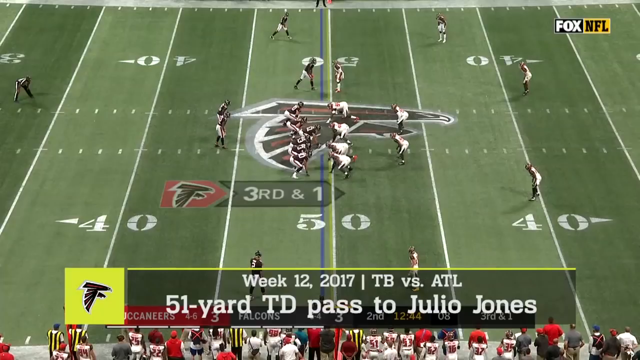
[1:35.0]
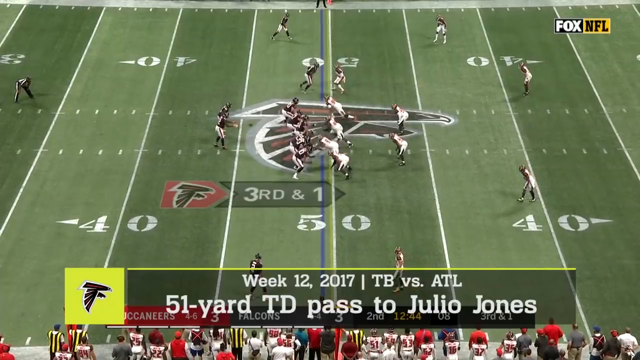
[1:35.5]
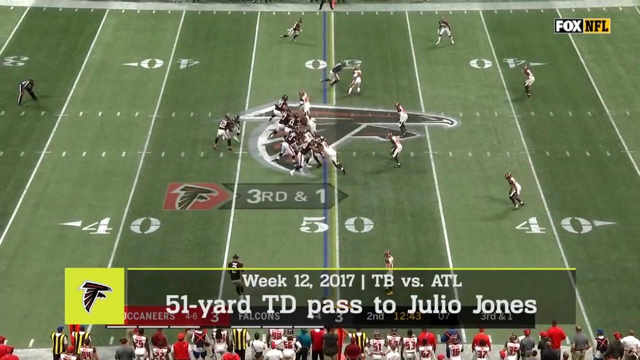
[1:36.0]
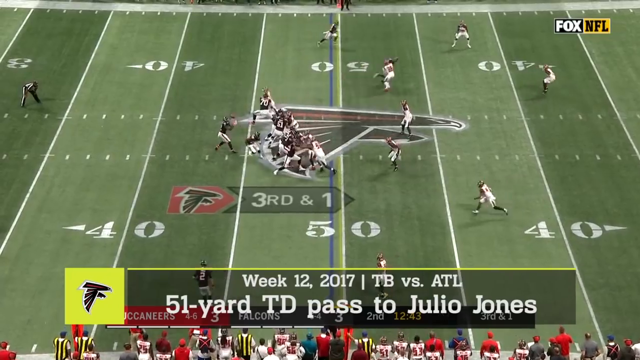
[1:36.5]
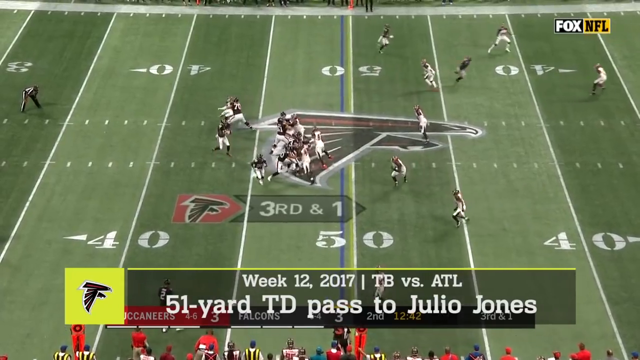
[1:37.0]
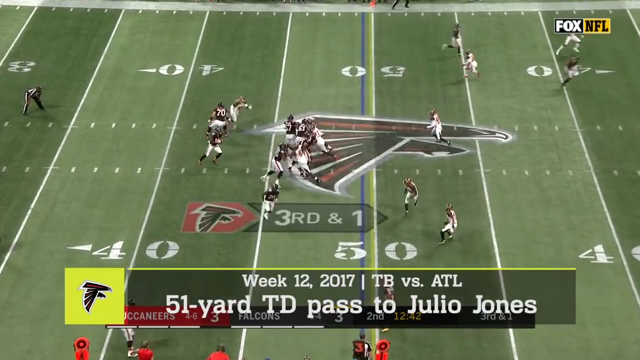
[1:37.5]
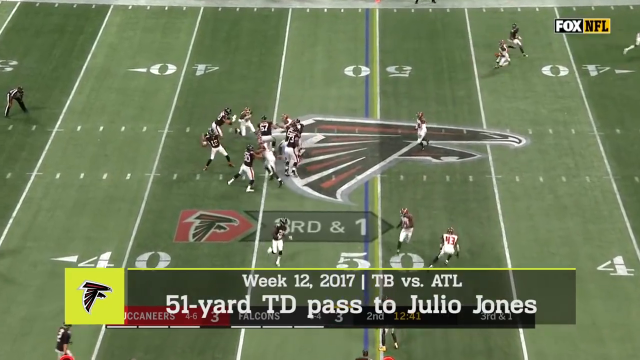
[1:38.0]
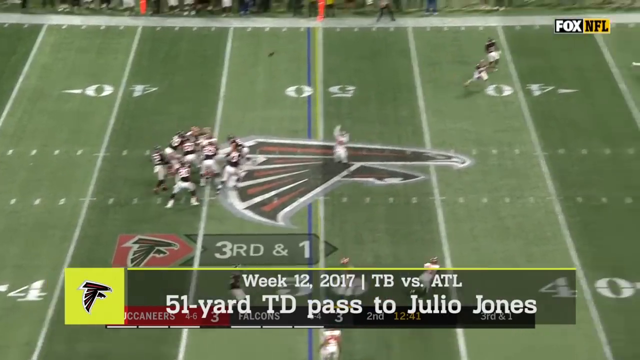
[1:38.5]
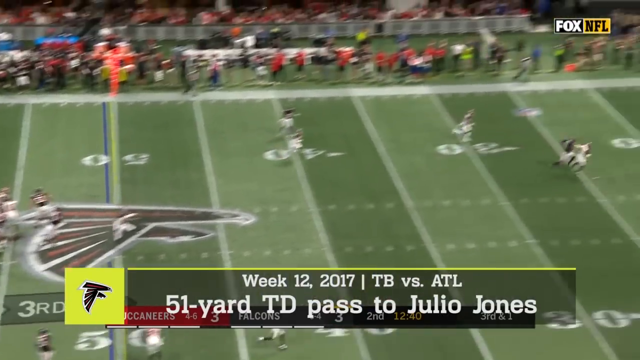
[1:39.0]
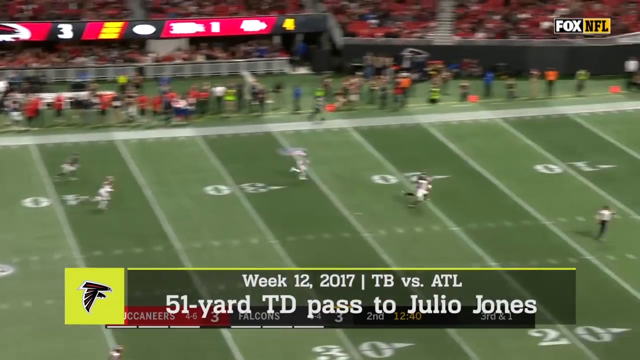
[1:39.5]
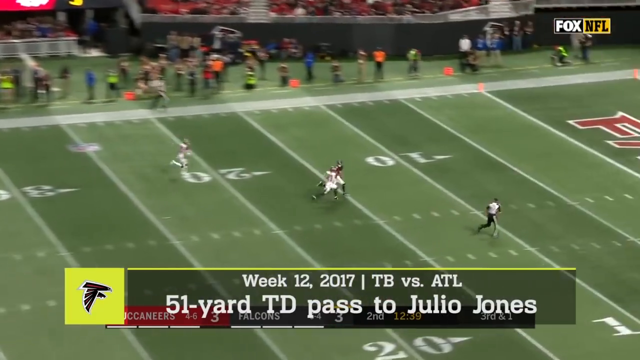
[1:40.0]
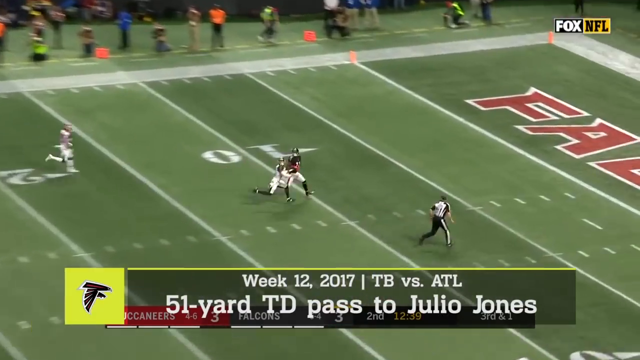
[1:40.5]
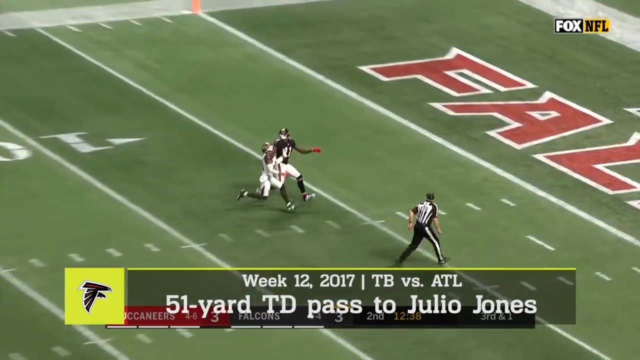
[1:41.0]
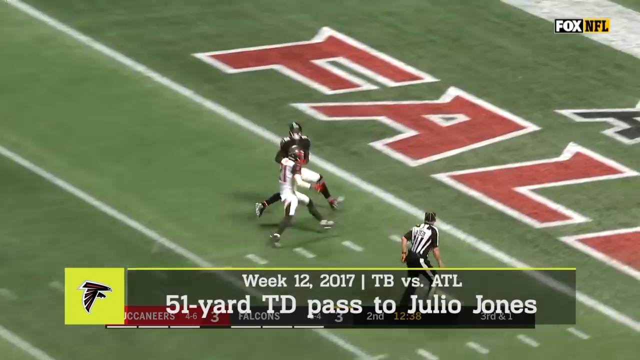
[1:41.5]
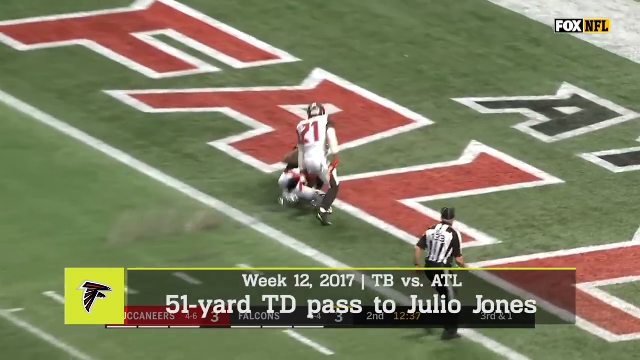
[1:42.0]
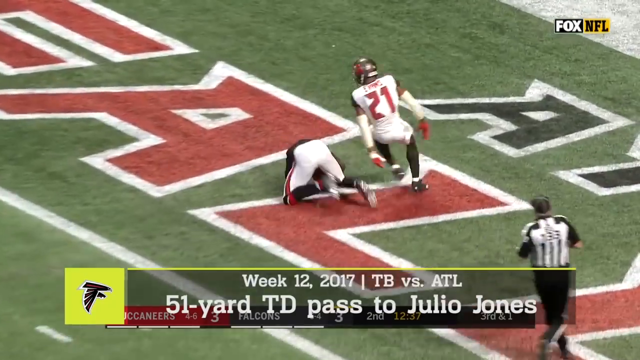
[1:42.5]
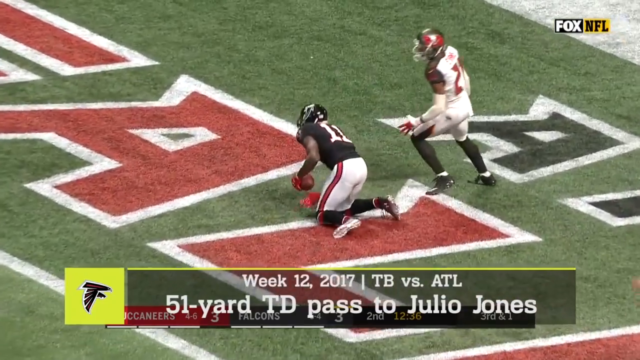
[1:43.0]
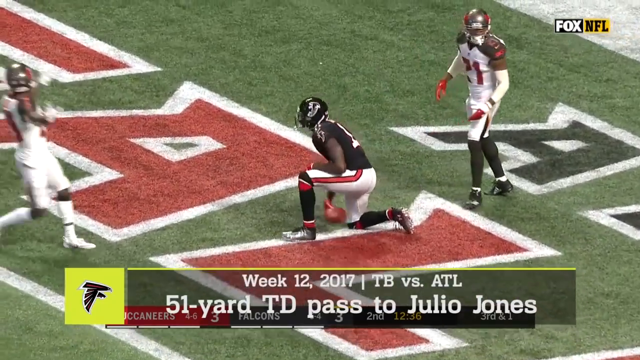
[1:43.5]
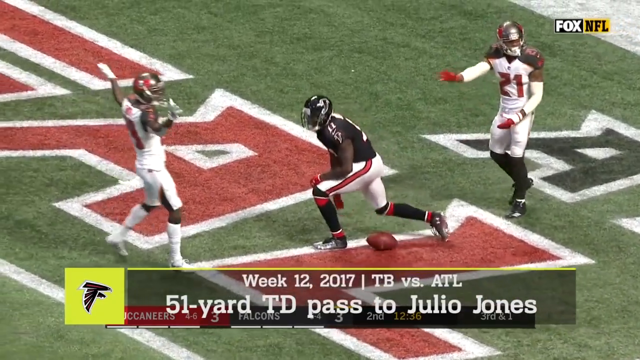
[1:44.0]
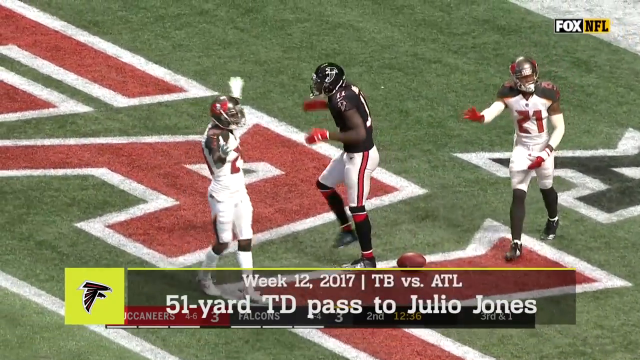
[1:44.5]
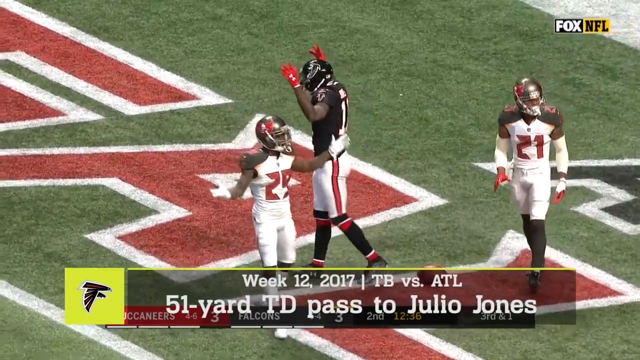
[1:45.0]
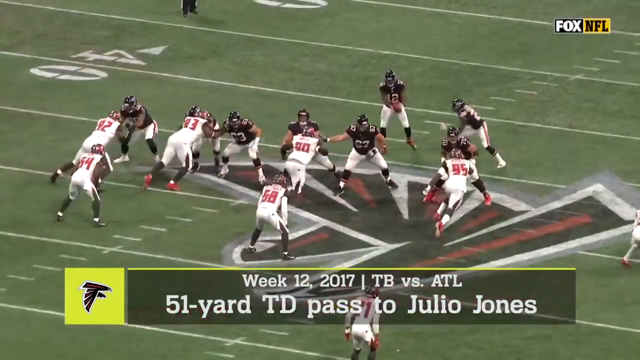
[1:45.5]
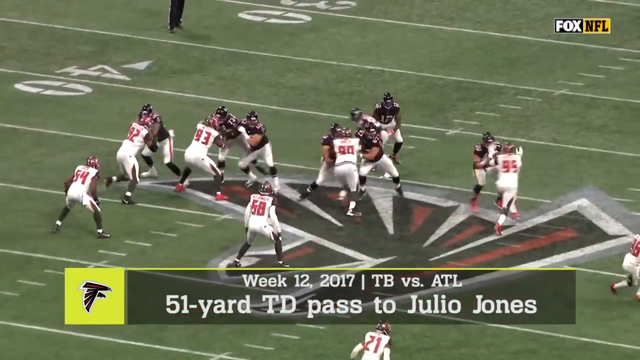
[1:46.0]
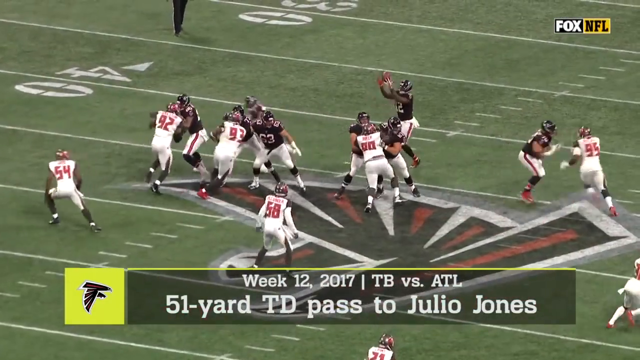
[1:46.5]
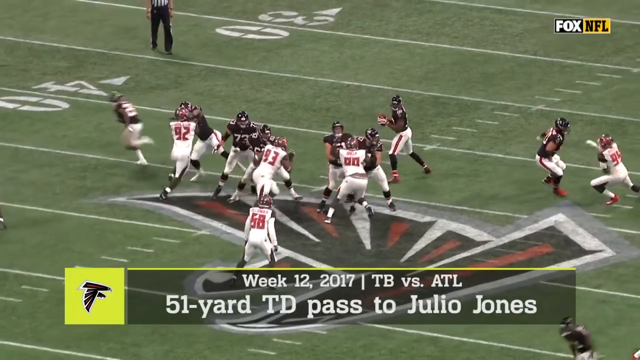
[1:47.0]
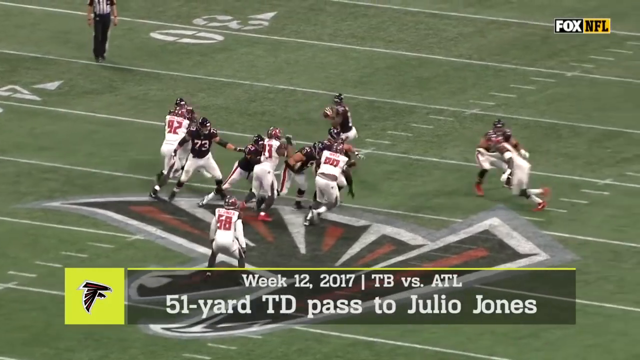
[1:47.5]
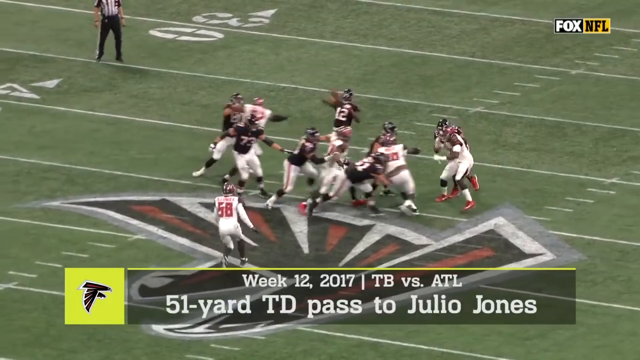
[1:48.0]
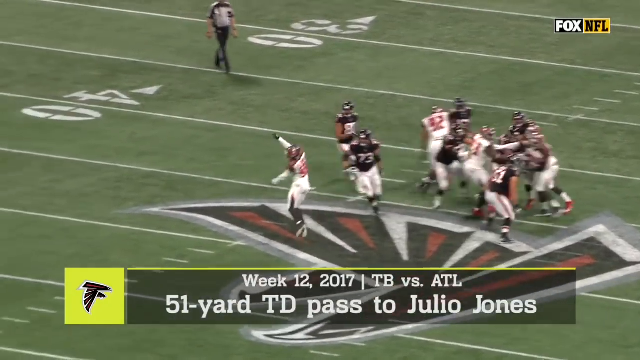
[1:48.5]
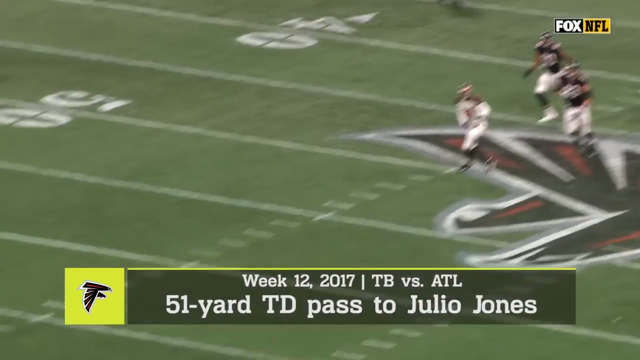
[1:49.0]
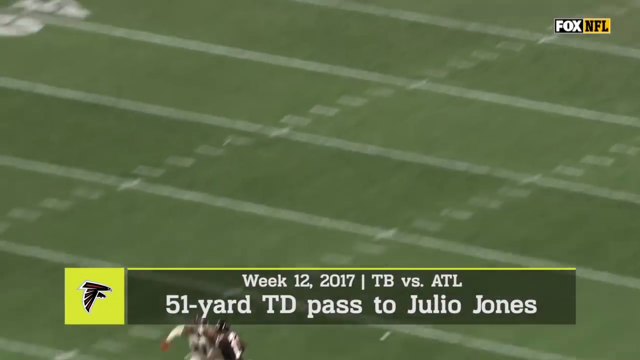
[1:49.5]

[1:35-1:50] Another play is in progress, with a translucent banner at the bottom of the screen reading "Week 12, 2017, TB versus ATL" and beneath it "51 yard TD pass to Julio Jones". One team wears black jerseys and the other appears to wear white jerseys with red letters. The team in black jerseys throws a pass that is caught in the end zone by a player wearing number 11, likely Julio Jones, who pulls the ball to his chest. He wears red gloves with the Under Armour logo and falls as he catches the ball.